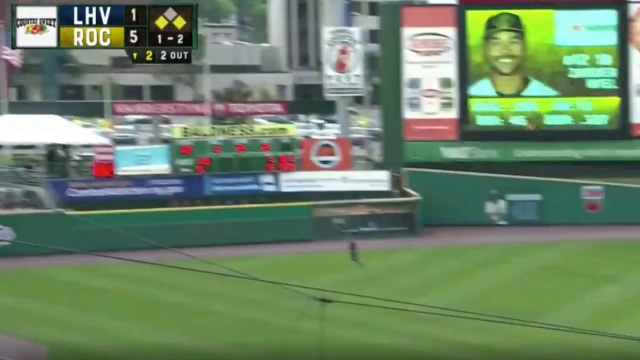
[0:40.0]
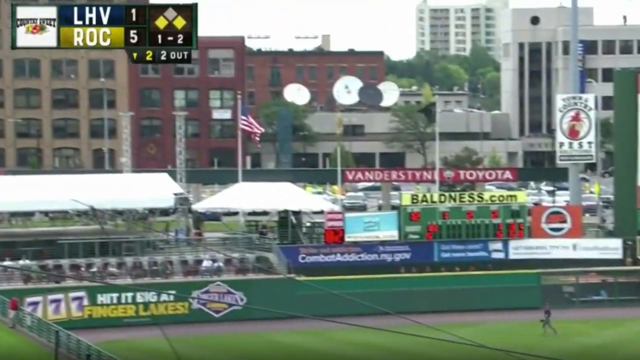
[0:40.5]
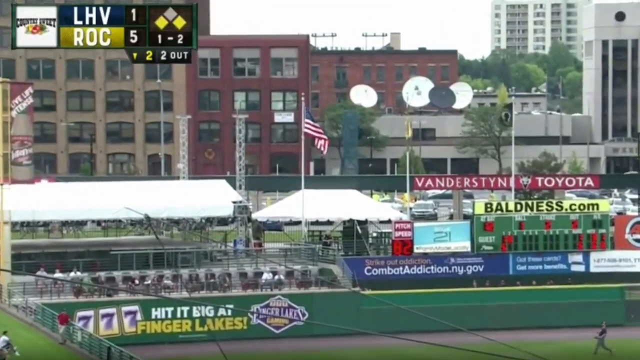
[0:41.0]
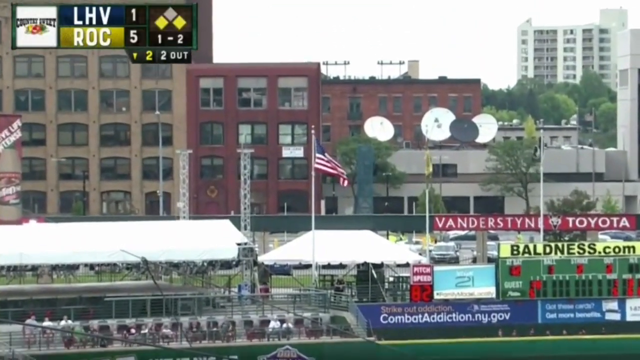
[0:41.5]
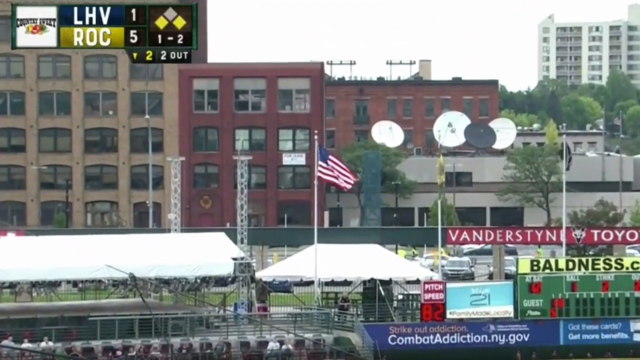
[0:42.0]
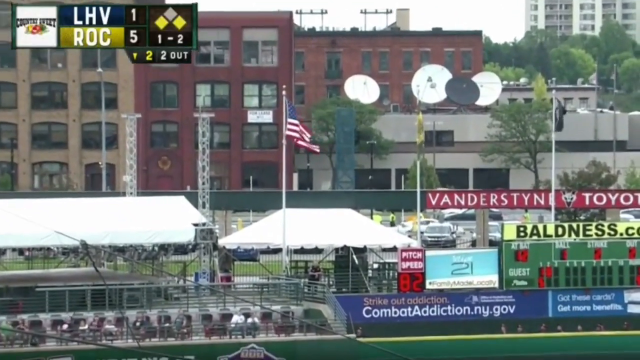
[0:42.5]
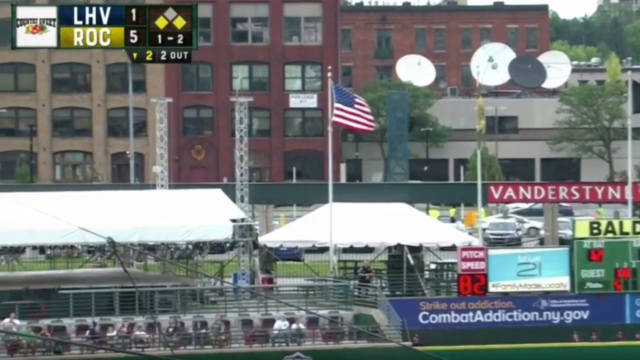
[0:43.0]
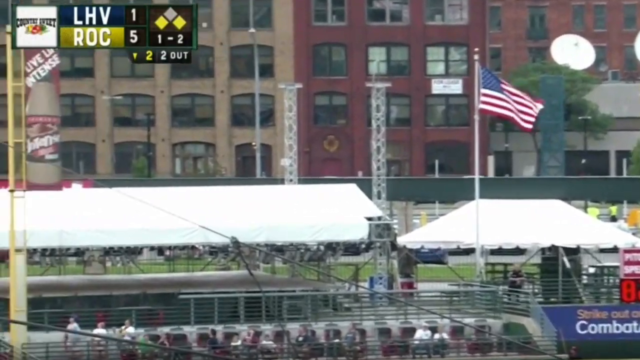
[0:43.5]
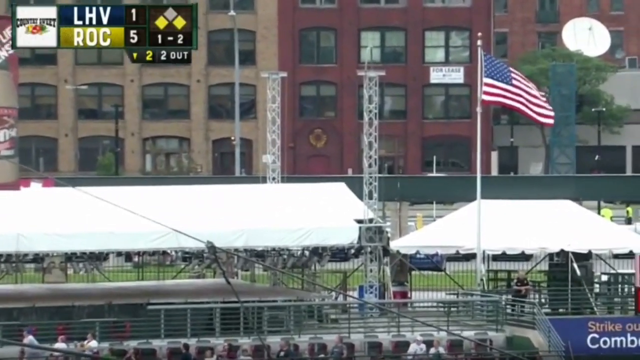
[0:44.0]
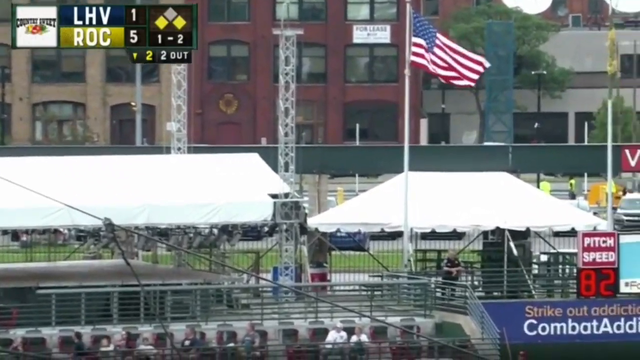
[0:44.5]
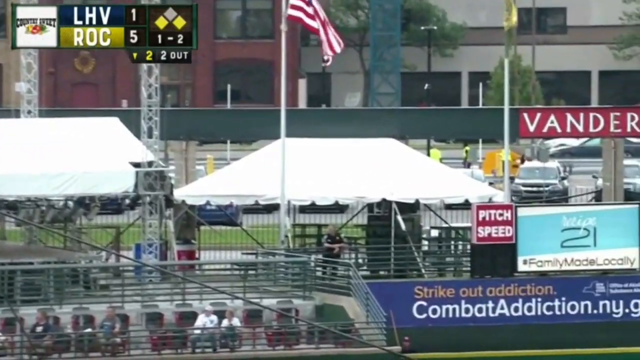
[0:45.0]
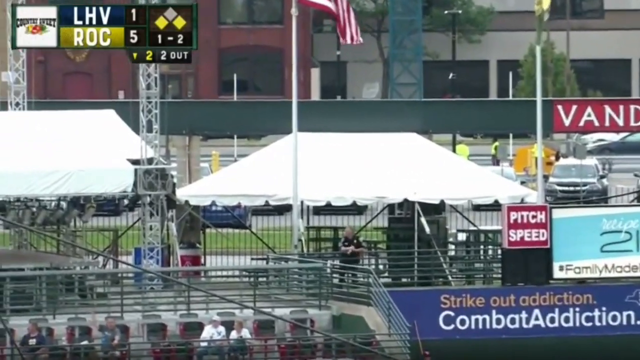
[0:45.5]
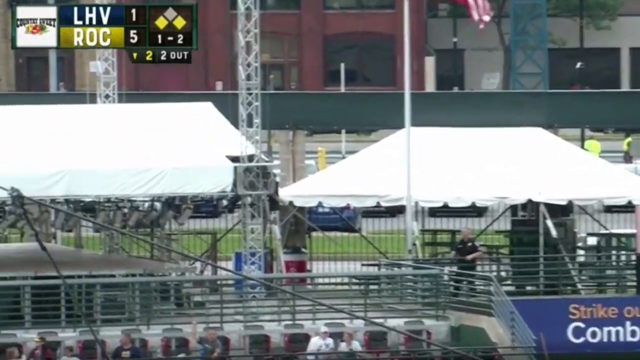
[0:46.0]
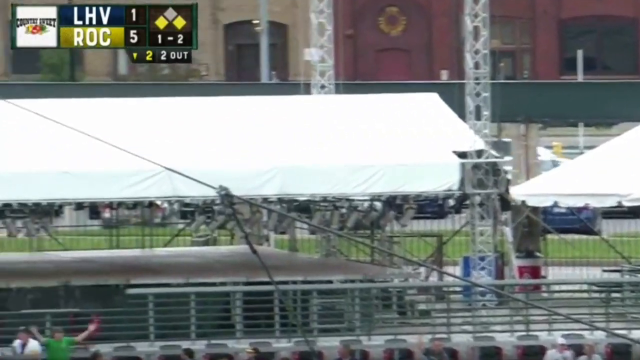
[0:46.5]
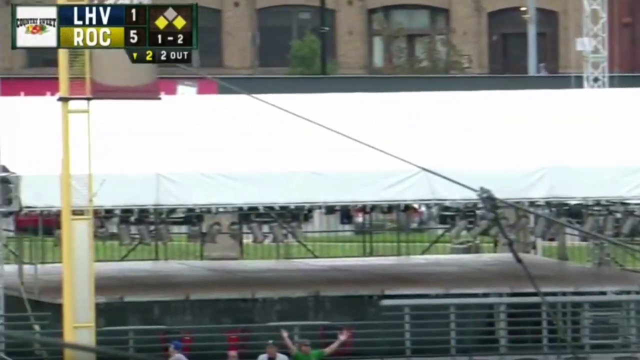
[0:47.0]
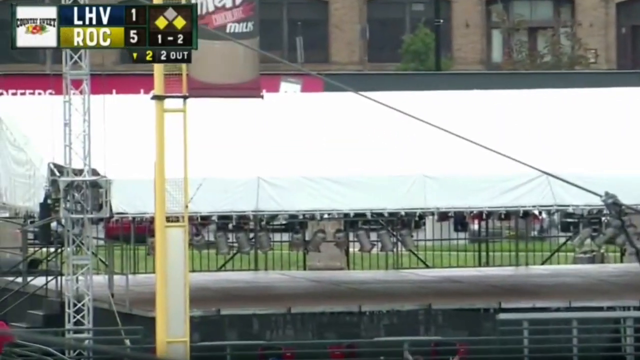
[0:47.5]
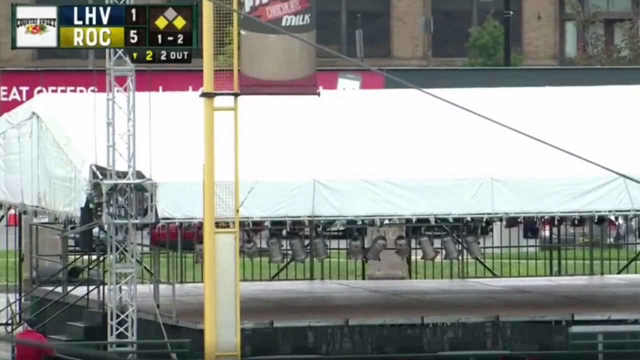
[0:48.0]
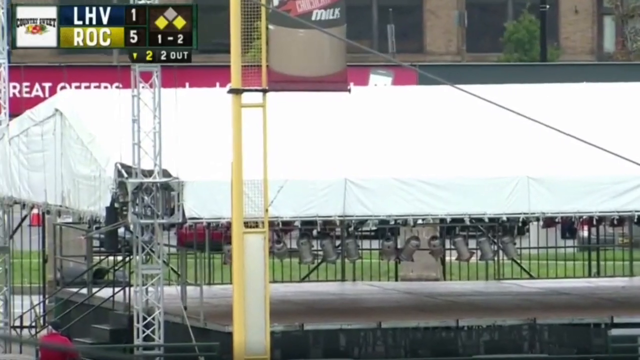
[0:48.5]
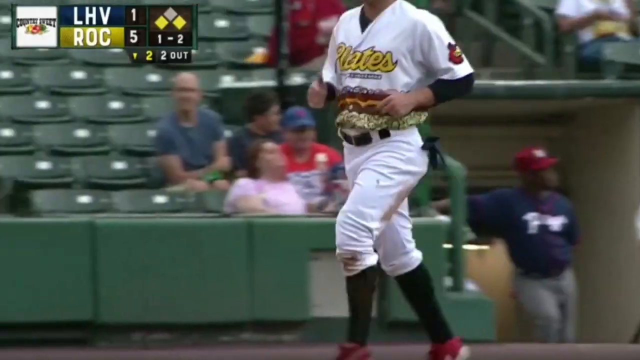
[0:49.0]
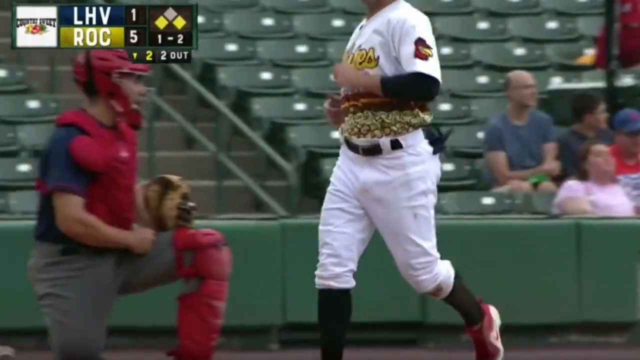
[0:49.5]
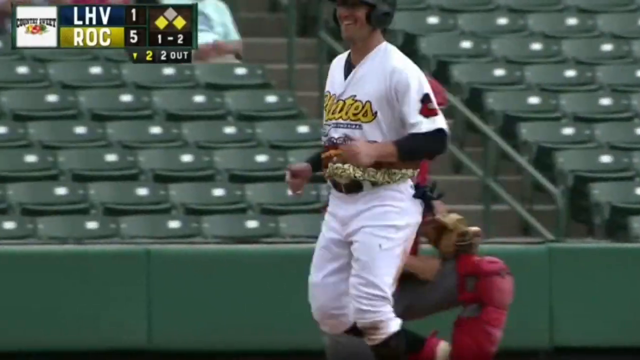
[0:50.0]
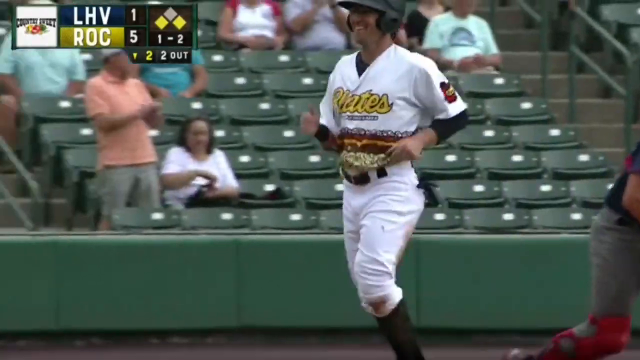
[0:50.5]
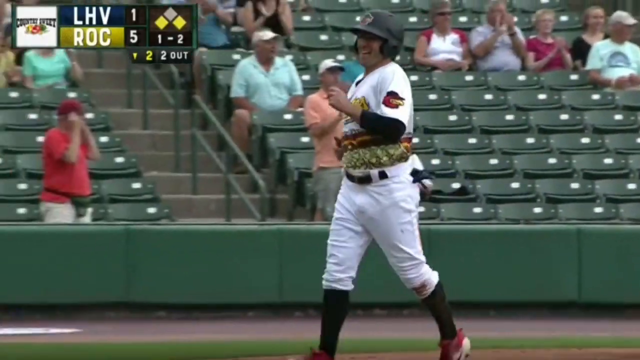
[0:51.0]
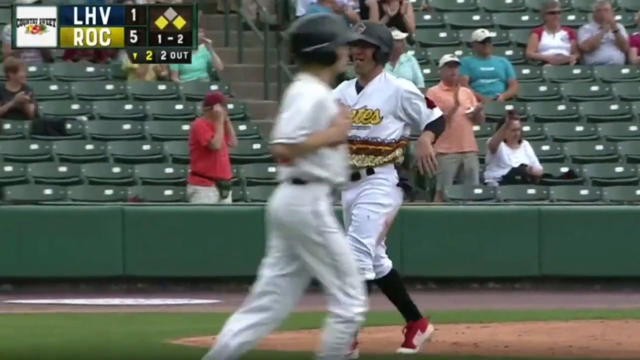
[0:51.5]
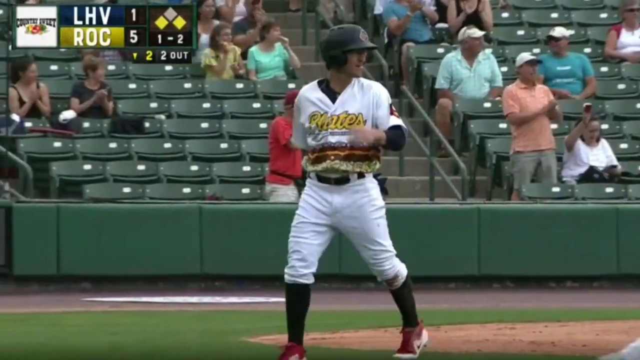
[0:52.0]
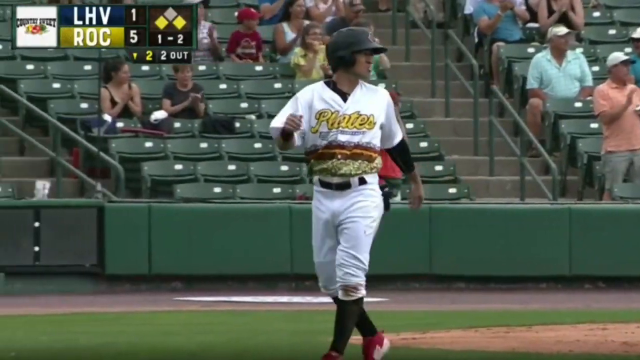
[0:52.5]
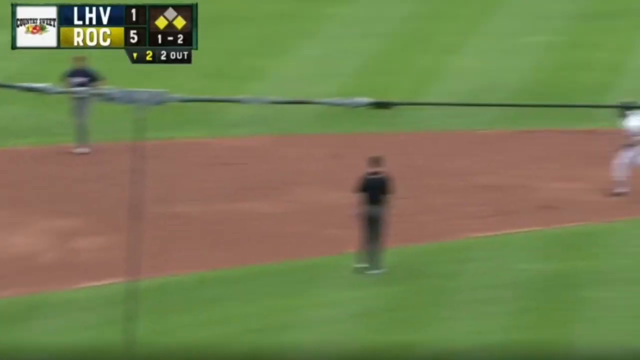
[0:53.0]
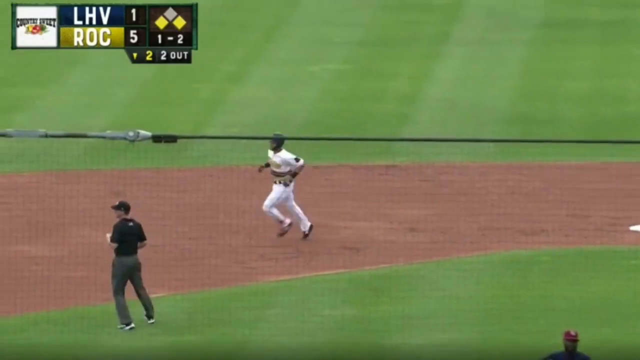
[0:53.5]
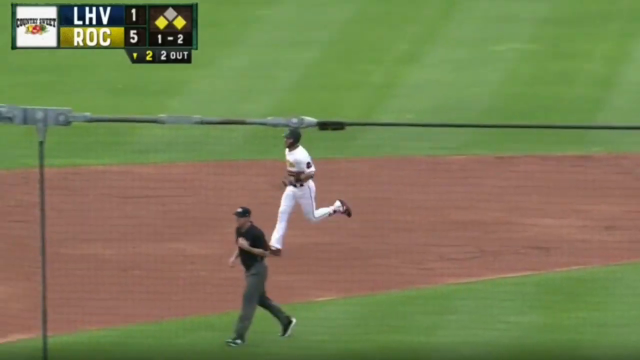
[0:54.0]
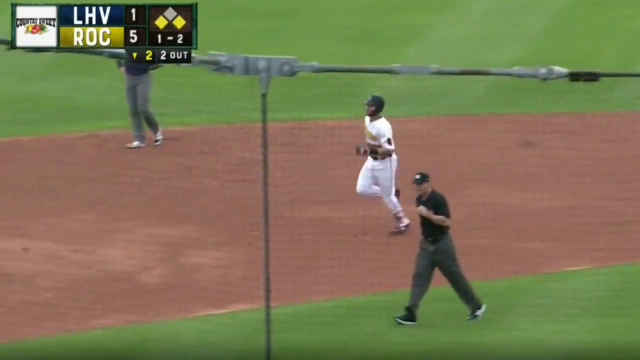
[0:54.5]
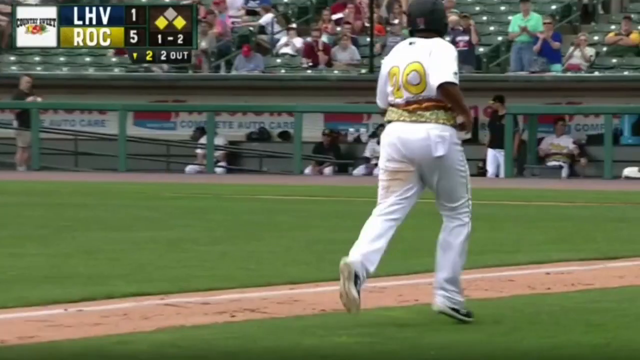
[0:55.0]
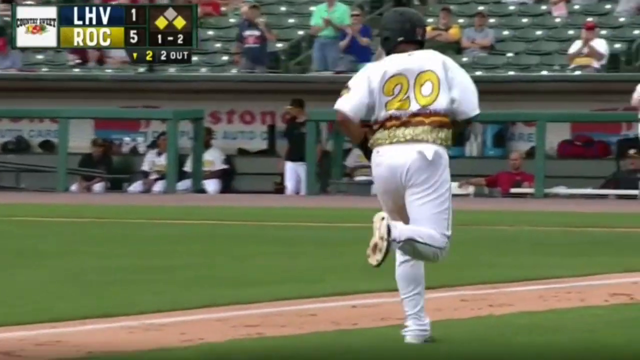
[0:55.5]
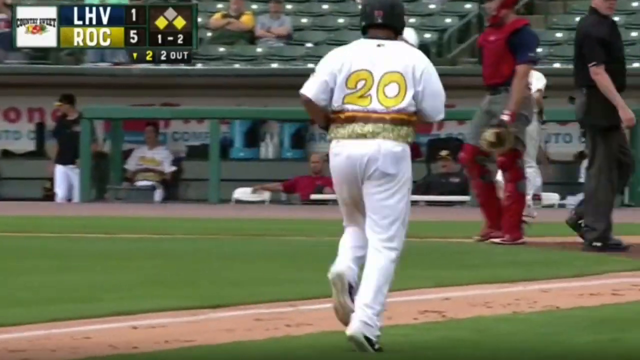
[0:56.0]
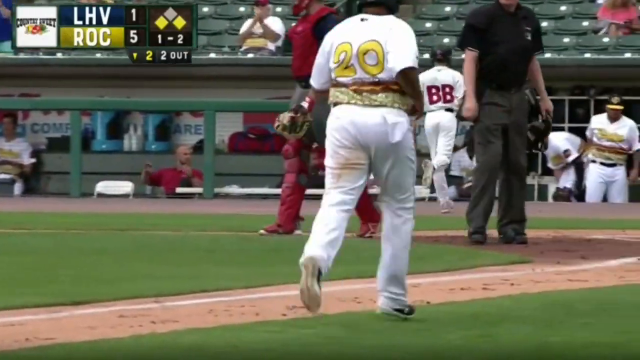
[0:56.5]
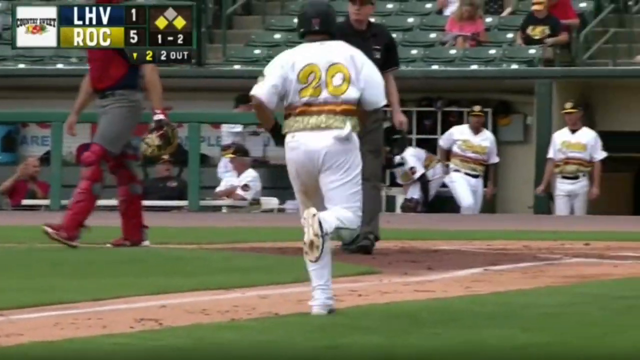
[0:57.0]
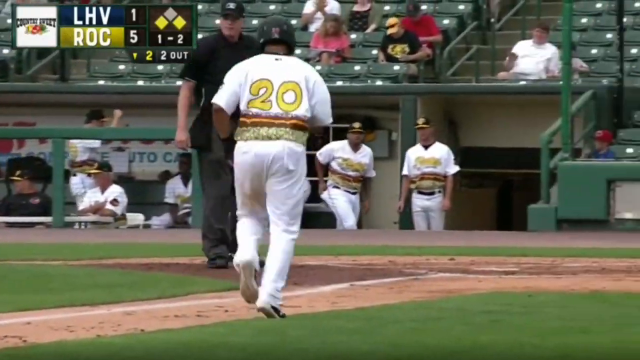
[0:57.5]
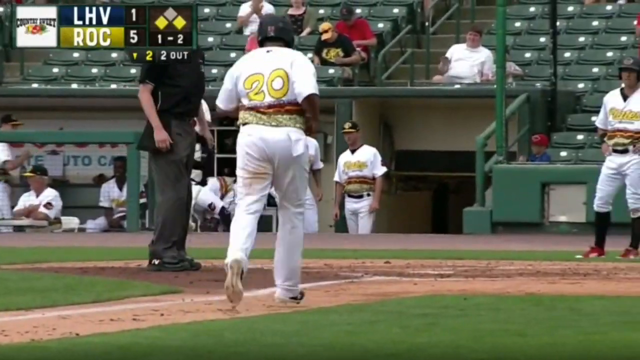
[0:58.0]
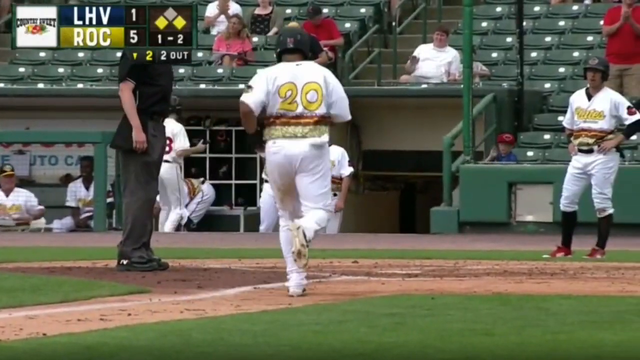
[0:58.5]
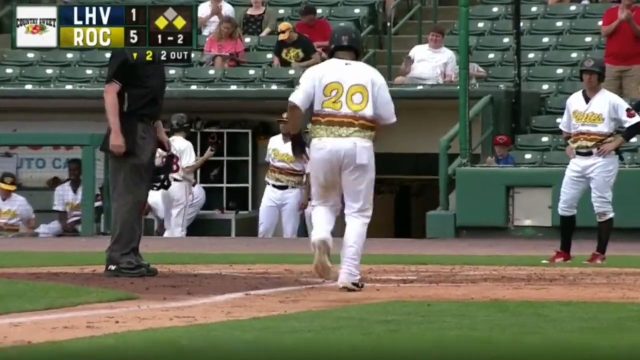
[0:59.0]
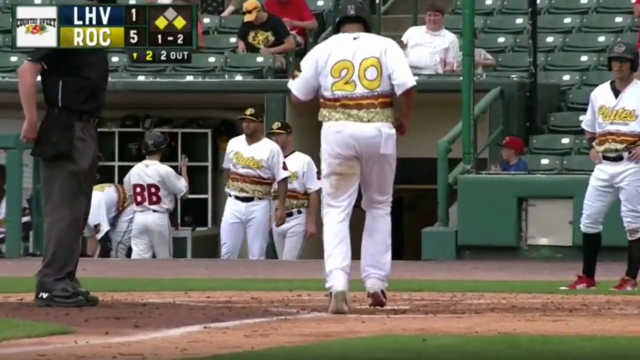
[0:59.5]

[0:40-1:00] An American flag is in the corner of the baseball stadium. The scoreboard between LHV and ROC reads 1 to 5, and that section has a logo of three connected squares. A board in the background shows a player smiling. Buildings are visible in the background around the area, and there is a lot of green grass in the middle of the field.